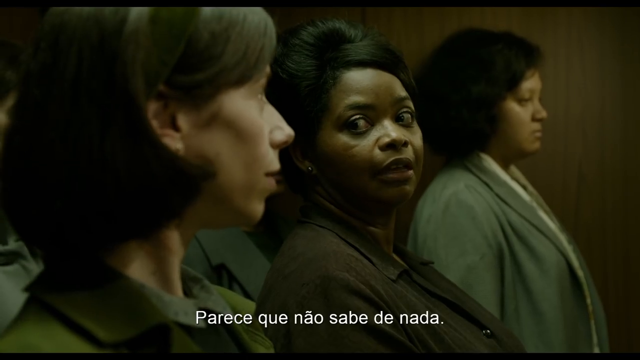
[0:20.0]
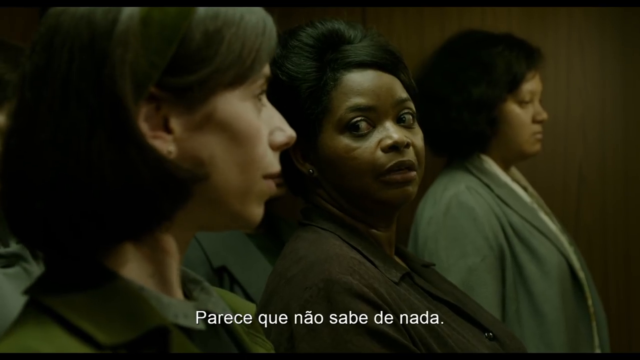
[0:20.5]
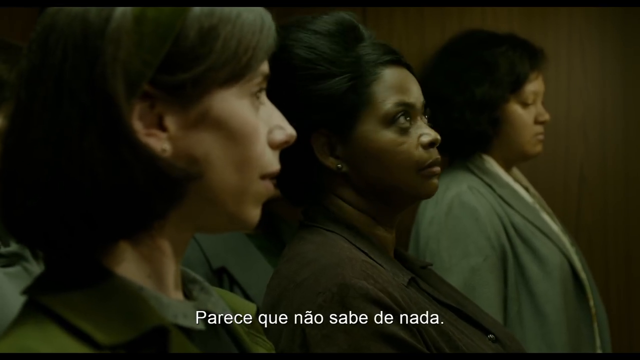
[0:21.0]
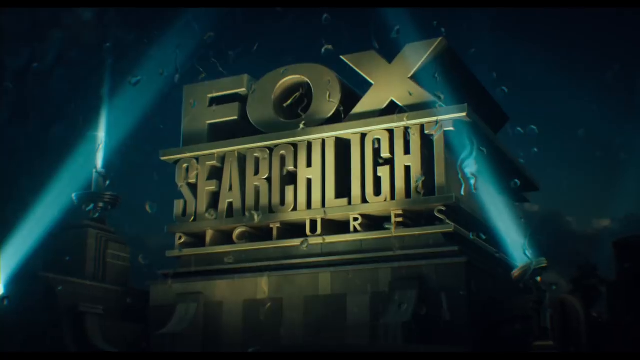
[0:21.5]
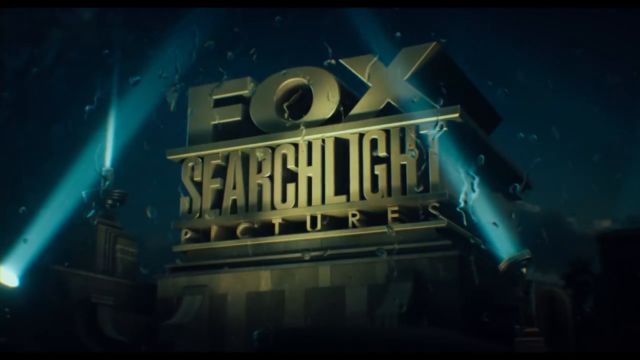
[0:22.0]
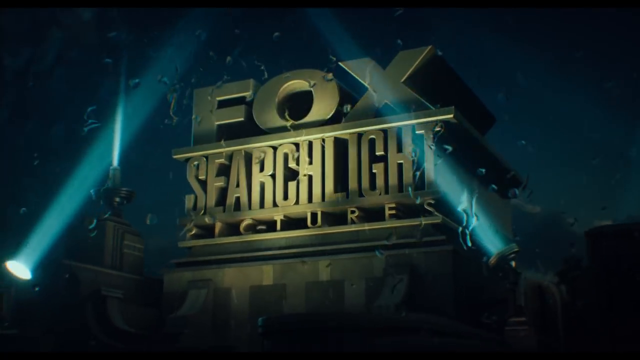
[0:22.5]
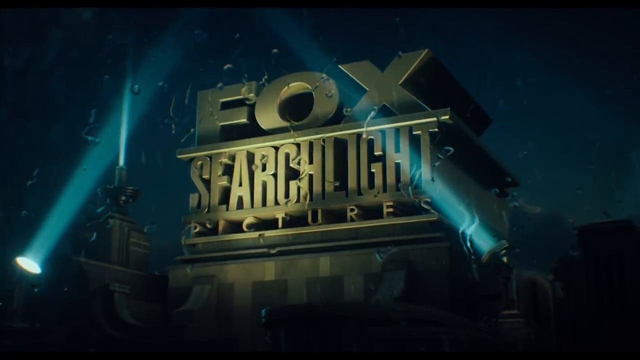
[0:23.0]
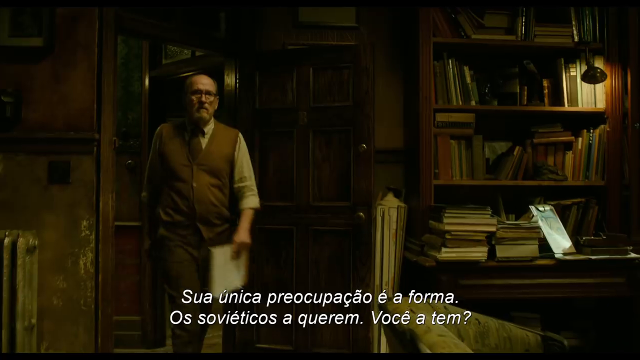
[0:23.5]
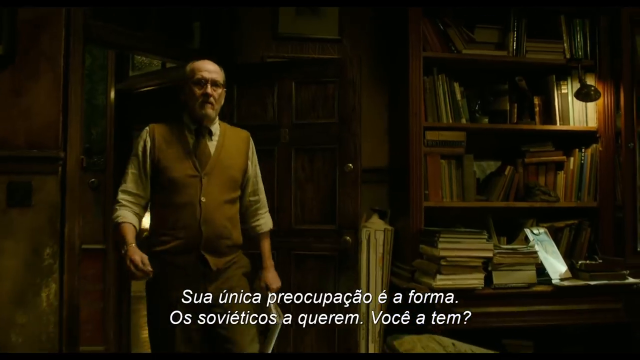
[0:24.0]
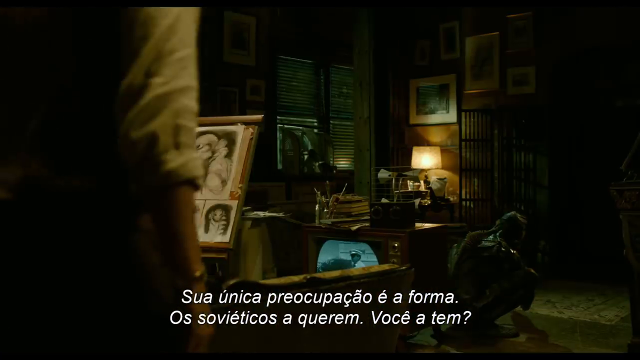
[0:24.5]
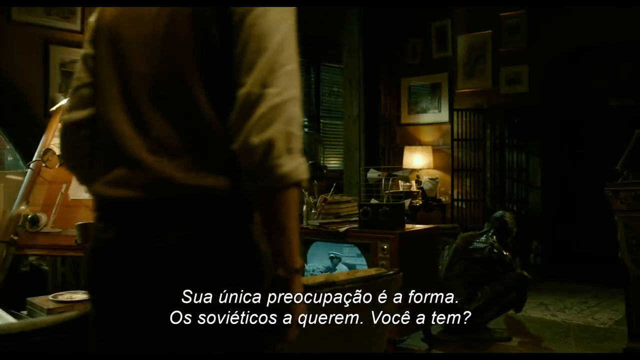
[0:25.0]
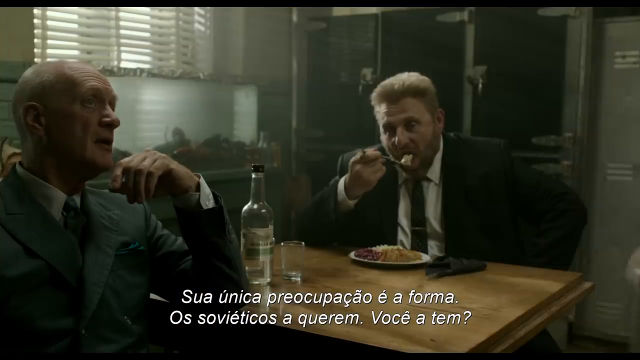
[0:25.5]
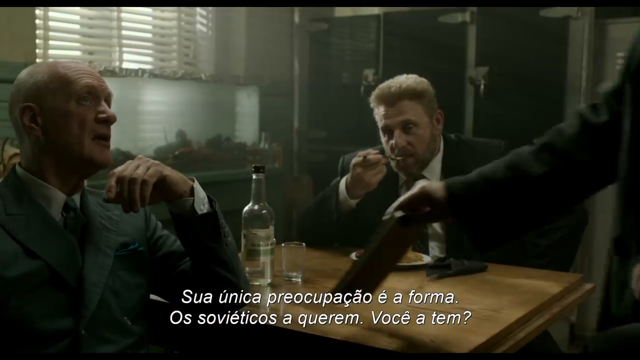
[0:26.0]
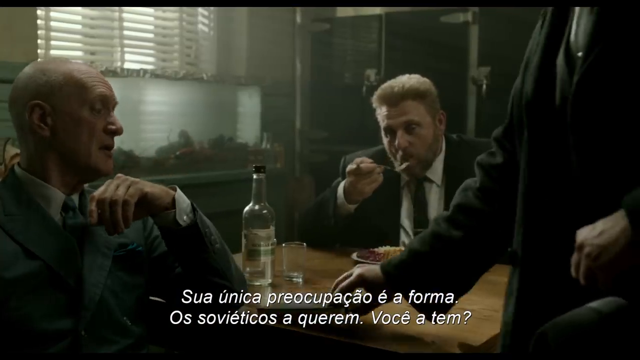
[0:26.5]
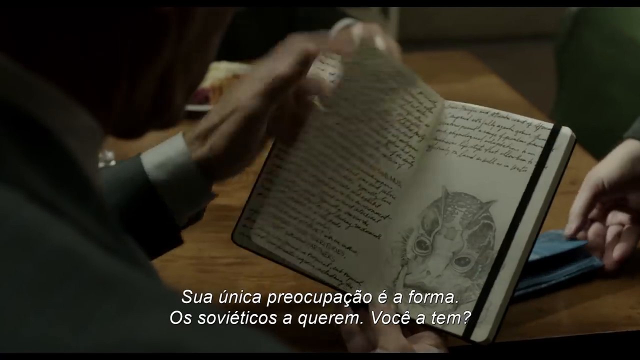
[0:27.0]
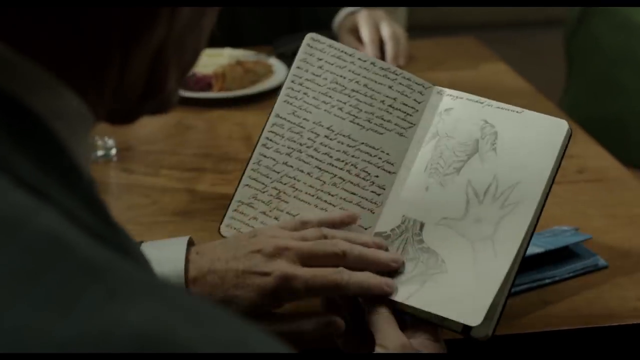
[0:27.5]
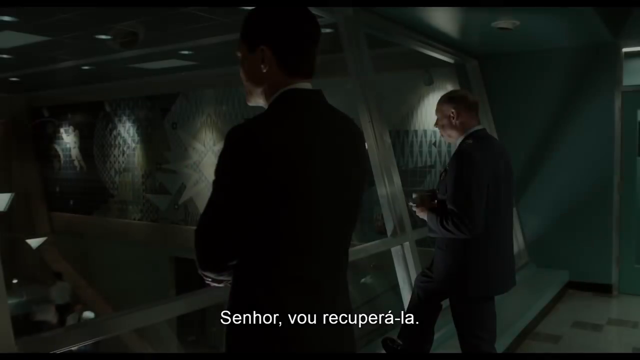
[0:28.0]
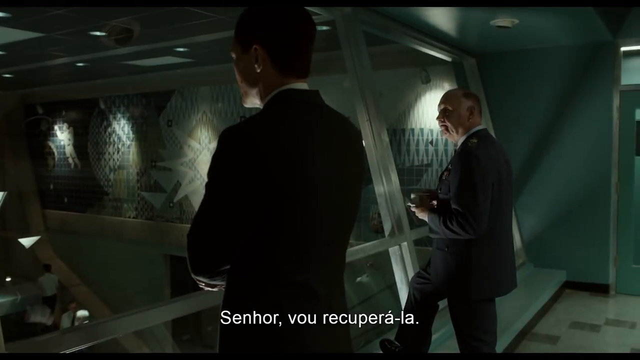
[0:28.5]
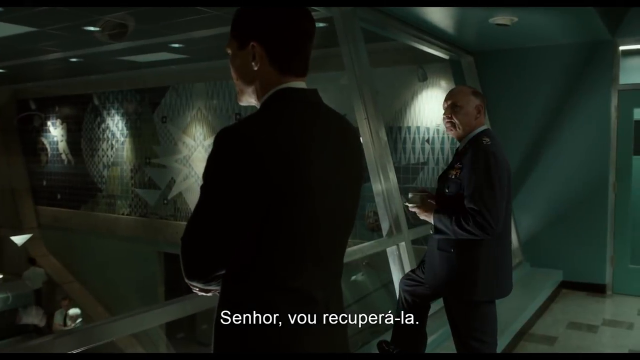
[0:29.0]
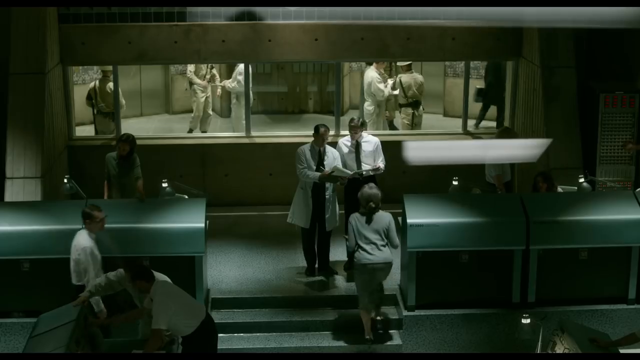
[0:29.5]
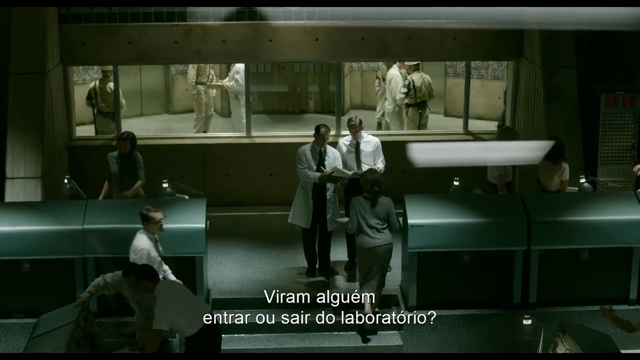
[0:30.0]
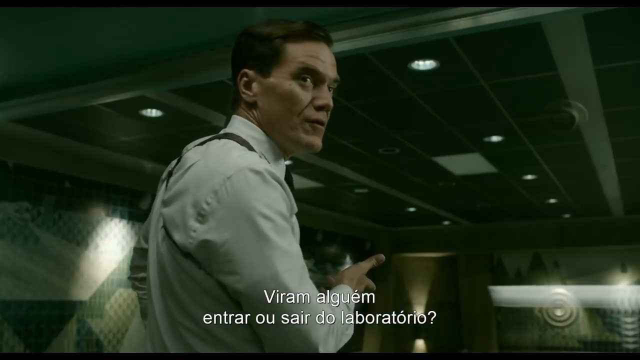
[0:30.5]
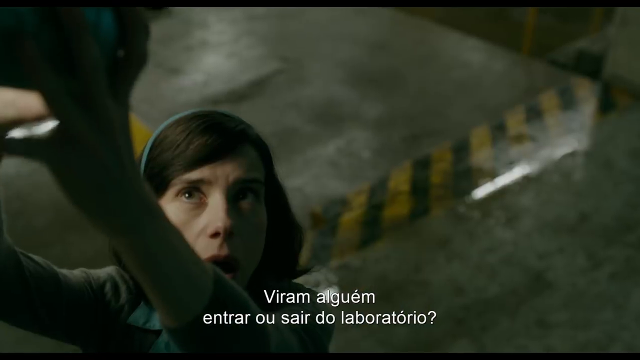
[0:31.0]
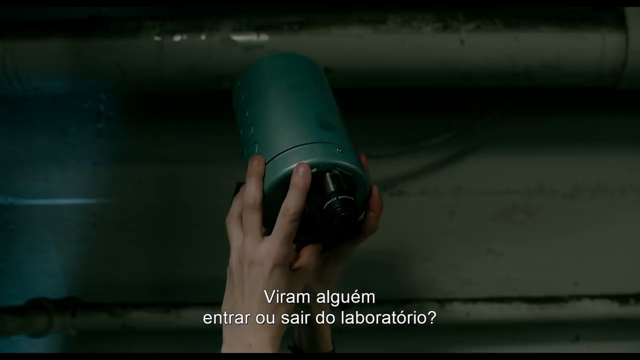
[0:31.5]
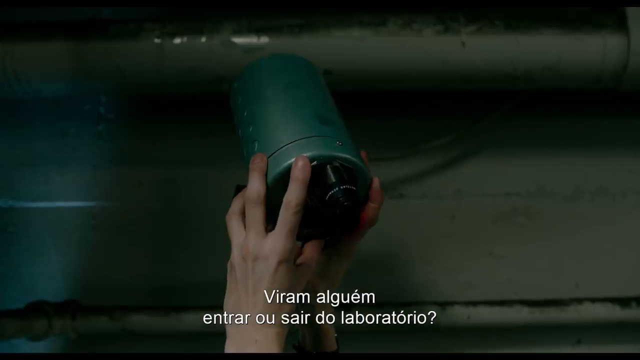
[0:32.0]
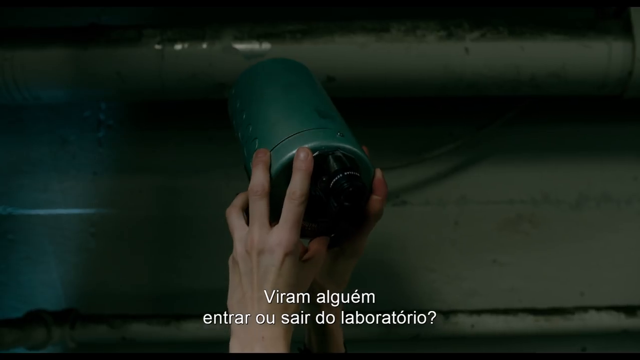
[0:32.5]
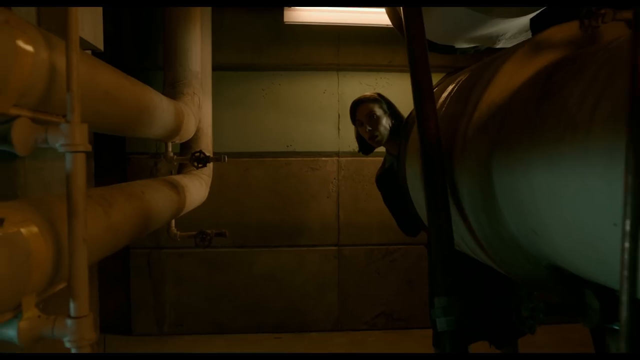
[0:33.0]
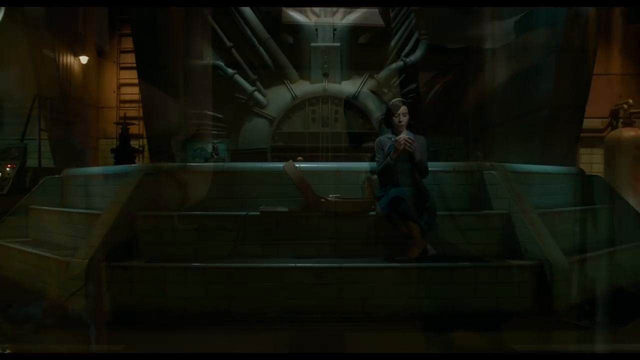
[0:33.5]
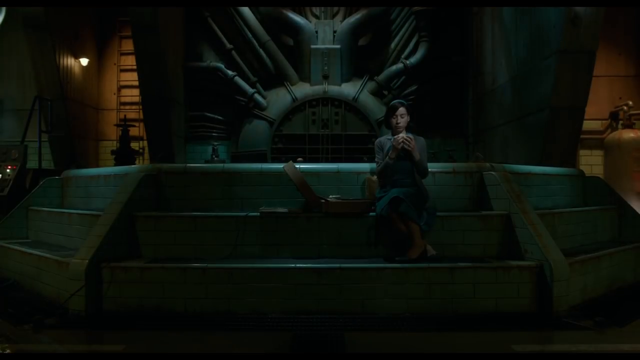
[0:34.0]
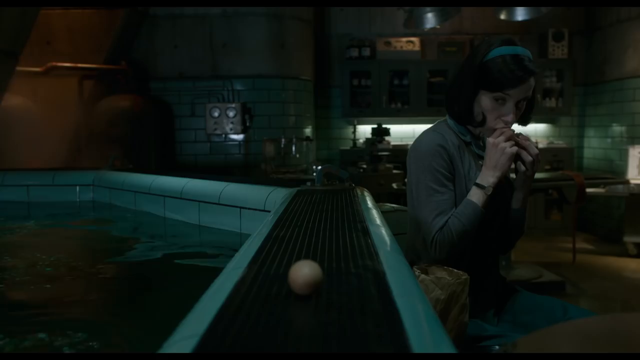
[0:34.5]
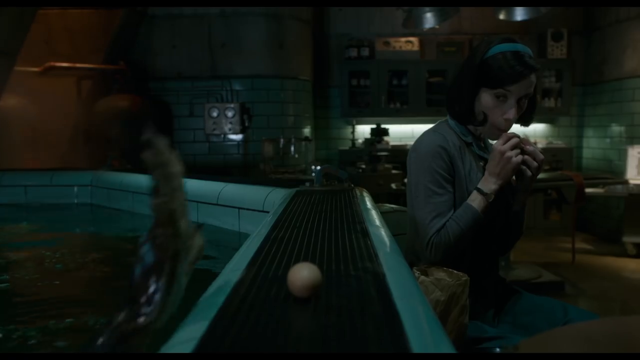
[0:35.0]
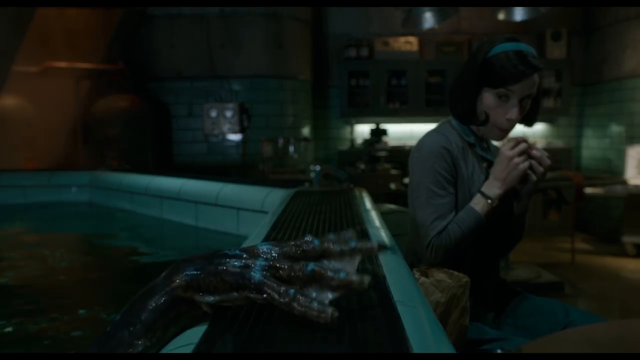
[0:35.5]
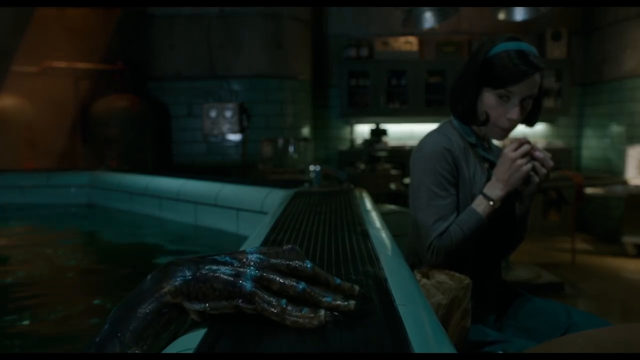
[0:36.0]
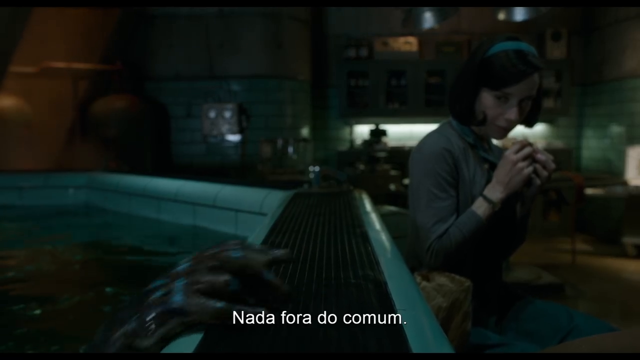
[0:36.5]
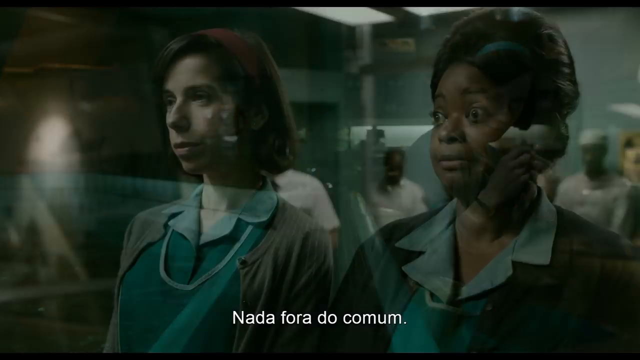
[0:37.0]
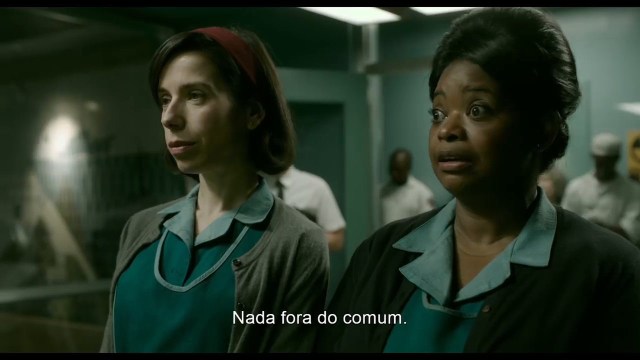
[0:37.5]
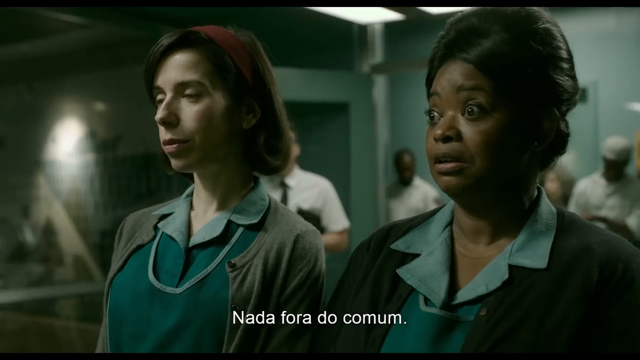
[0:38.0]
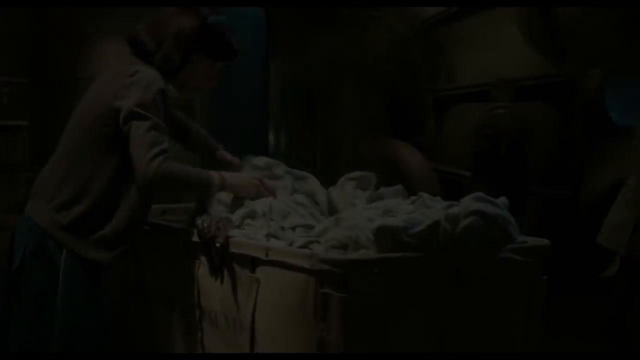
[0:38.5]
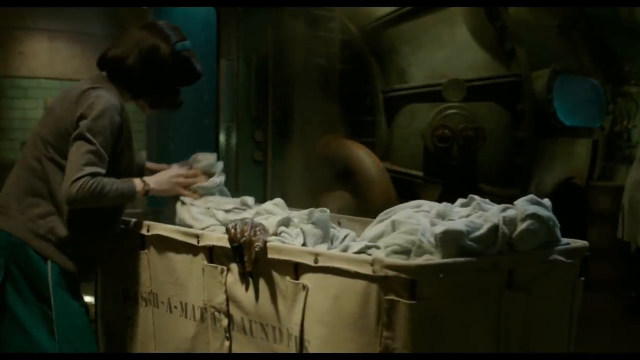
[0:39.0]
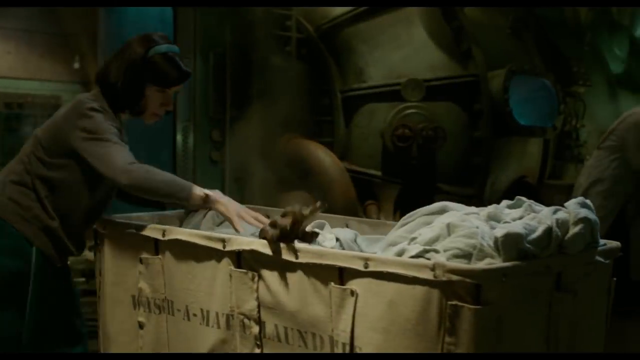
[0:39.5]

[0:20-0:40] Three women fill the frame. On the left is a Caucasian woman with dark brown hair. An African descent woman with styled hair, wearing a dark brown blouse or shirt, looks at the Caucasian woman. To her right, on the right side of the screen, is another woman of apparent African descent with slightly lighter skin and dark brown or black hair, wearing a gray jacket or coat. Text in another language at the bottom of the screen reads "PARECE QUE NAO SABE VE nada". The woman in the middle talks to the Caucasian woman, says something to her, then looks forward. The video then changes to a Fox logo with two spotlights shining on it that says "Fox Searchlight Pictures".